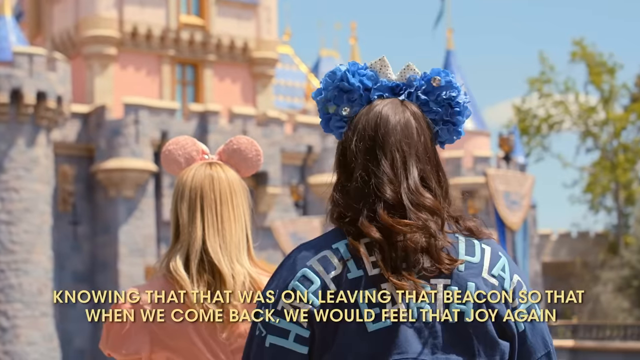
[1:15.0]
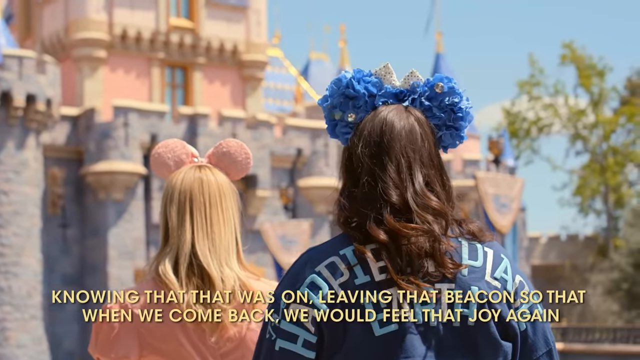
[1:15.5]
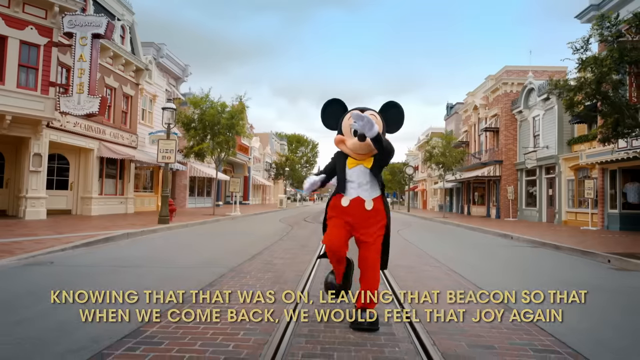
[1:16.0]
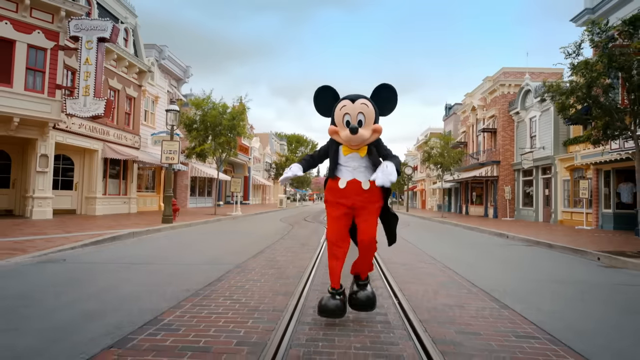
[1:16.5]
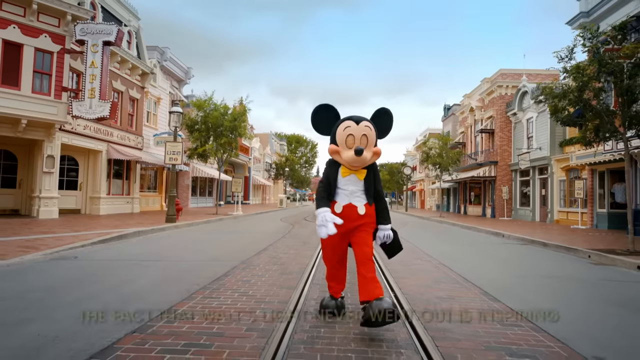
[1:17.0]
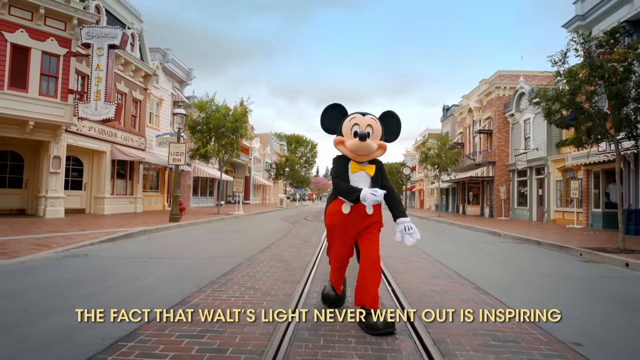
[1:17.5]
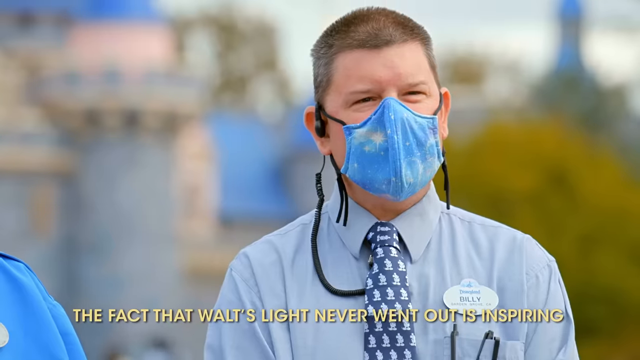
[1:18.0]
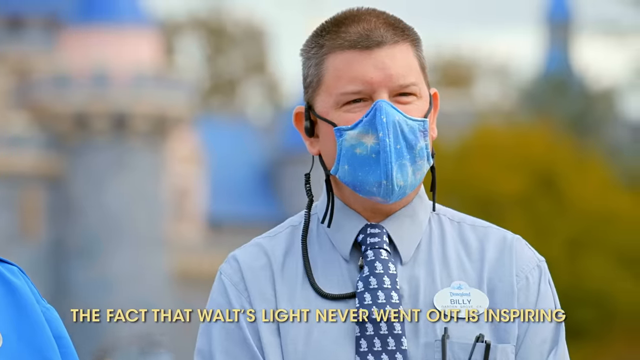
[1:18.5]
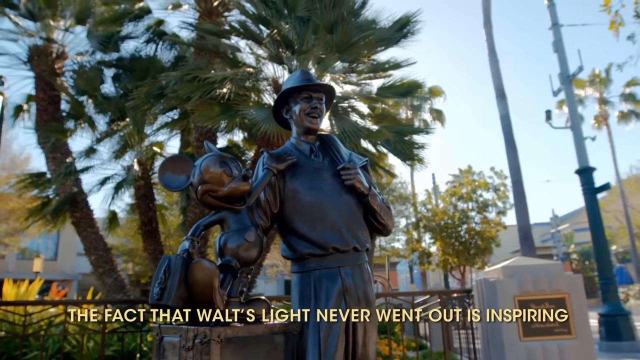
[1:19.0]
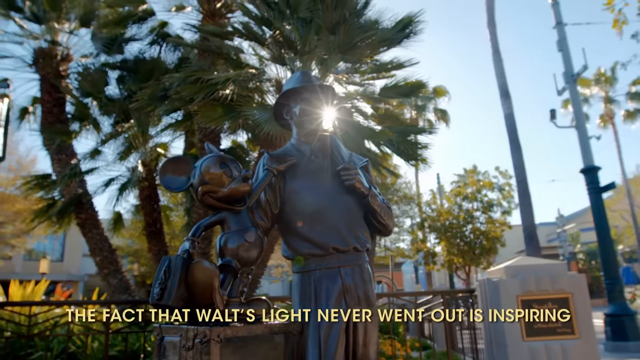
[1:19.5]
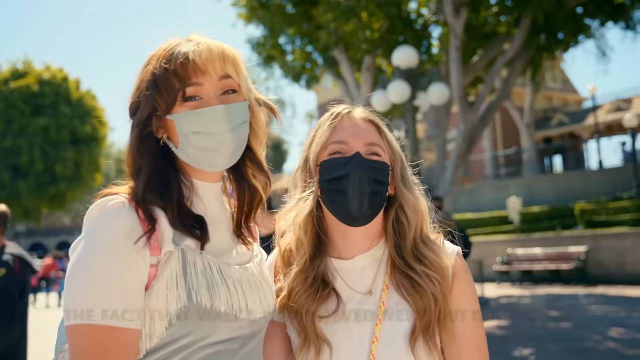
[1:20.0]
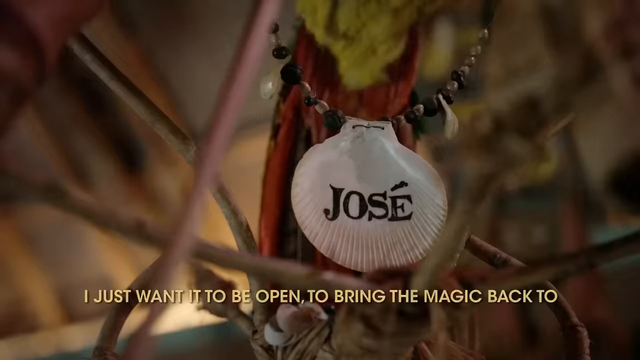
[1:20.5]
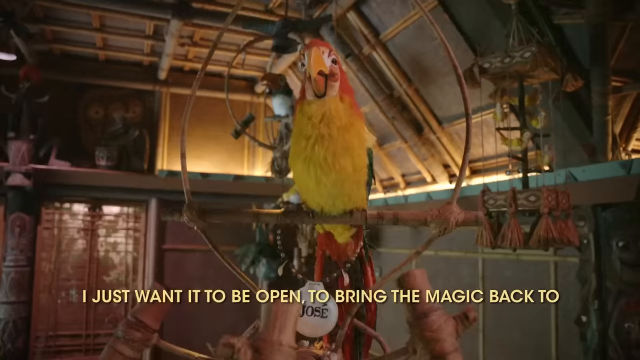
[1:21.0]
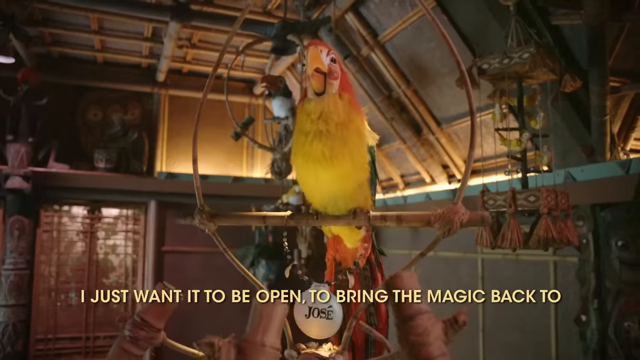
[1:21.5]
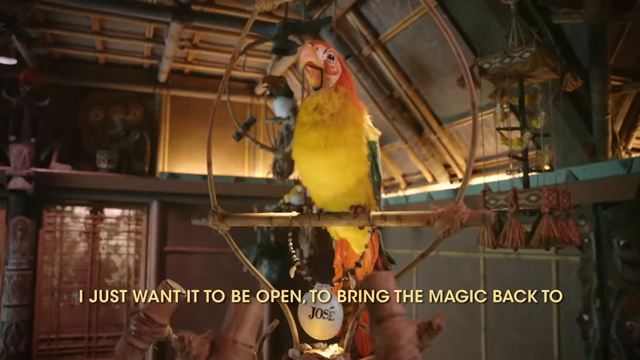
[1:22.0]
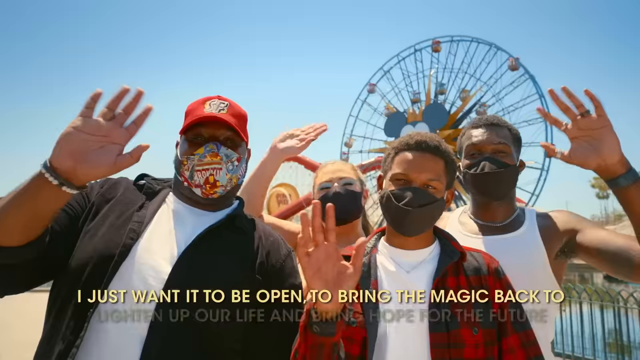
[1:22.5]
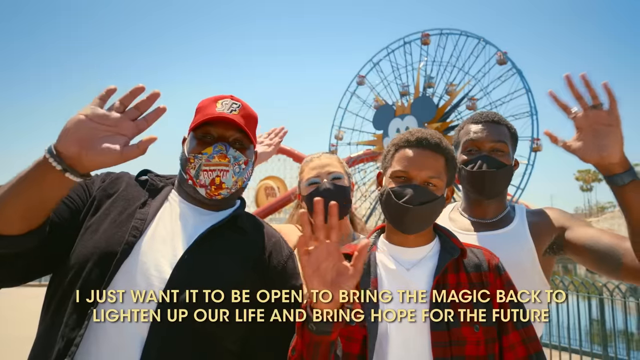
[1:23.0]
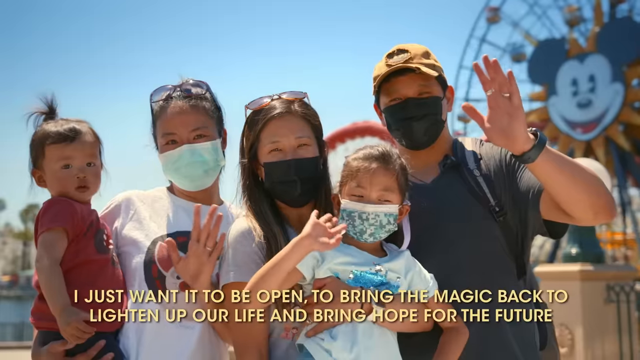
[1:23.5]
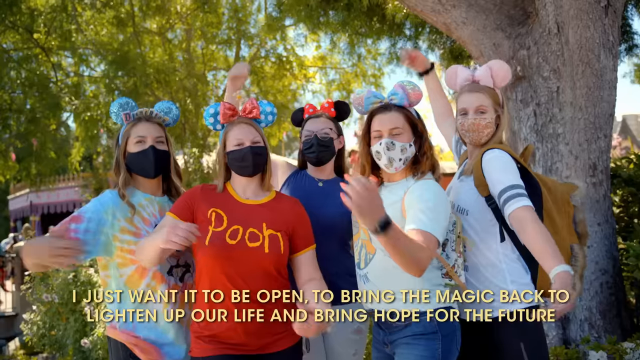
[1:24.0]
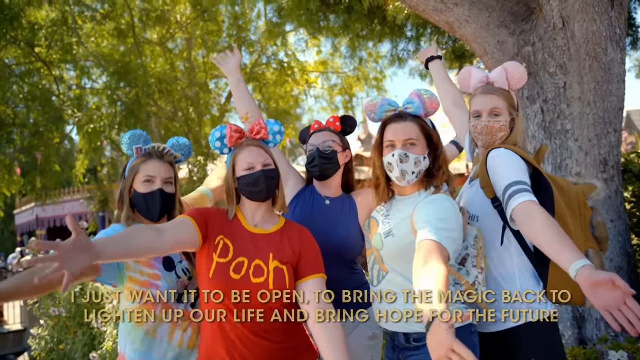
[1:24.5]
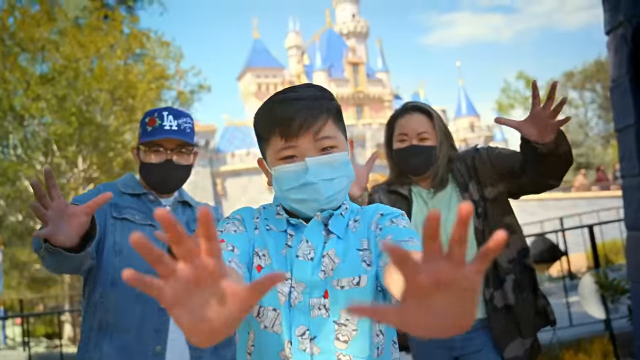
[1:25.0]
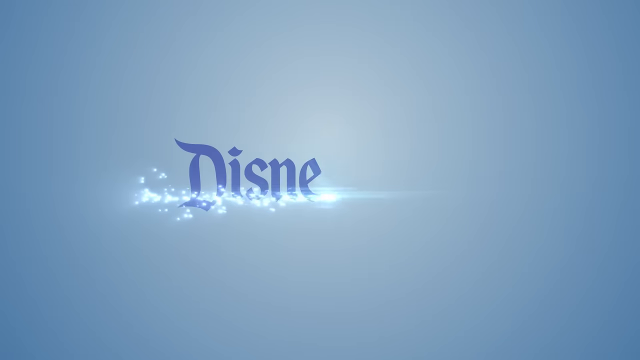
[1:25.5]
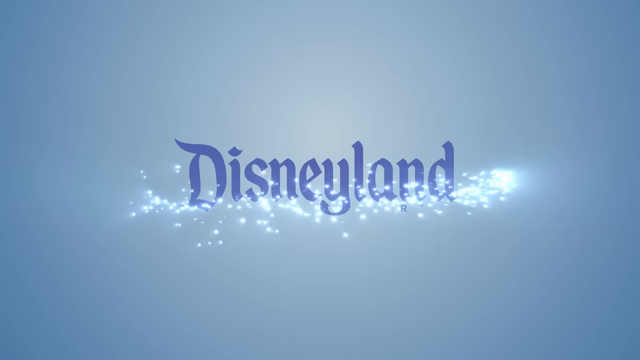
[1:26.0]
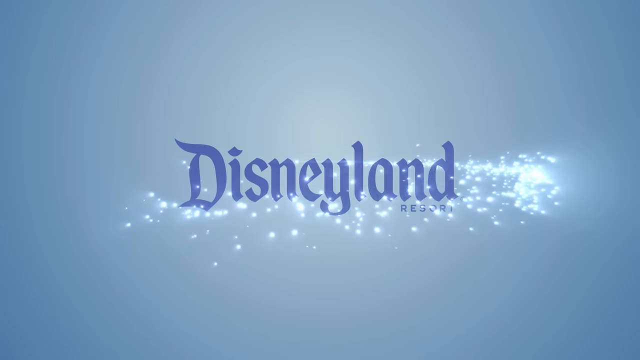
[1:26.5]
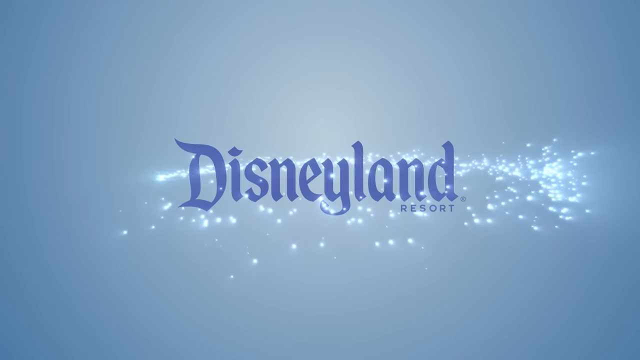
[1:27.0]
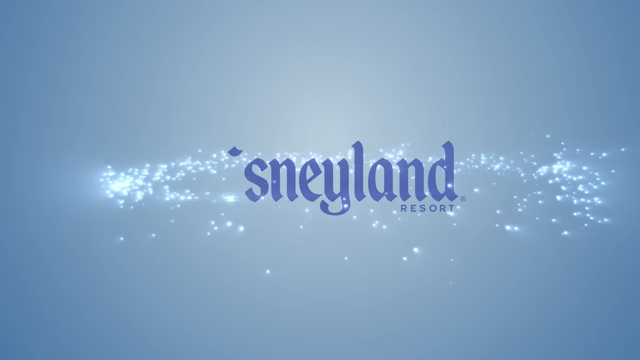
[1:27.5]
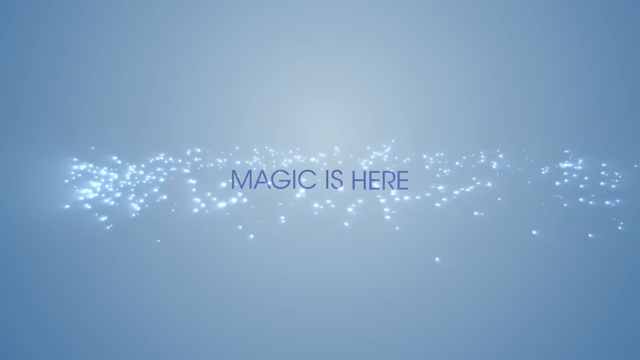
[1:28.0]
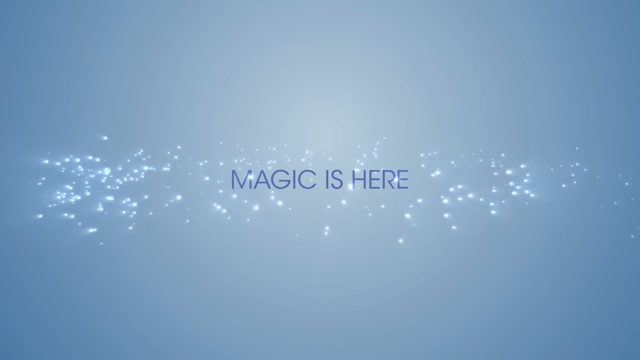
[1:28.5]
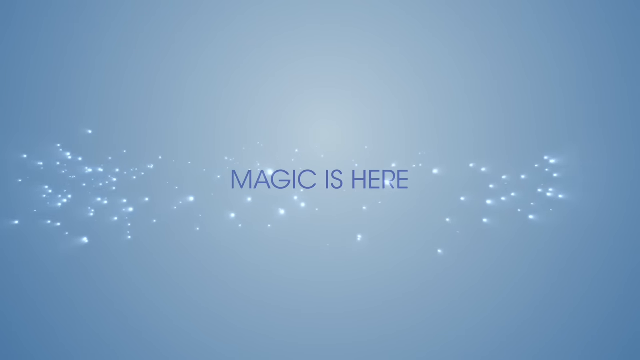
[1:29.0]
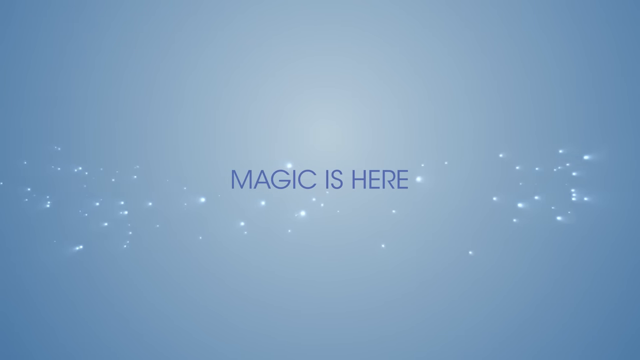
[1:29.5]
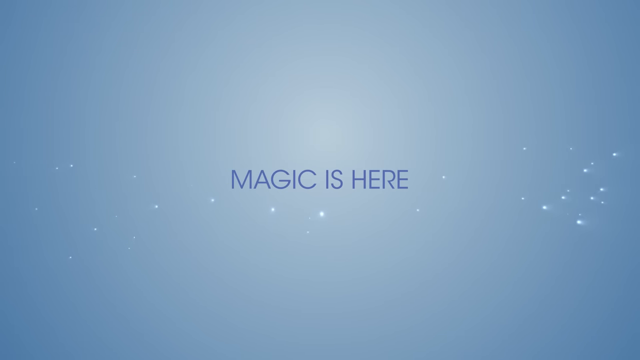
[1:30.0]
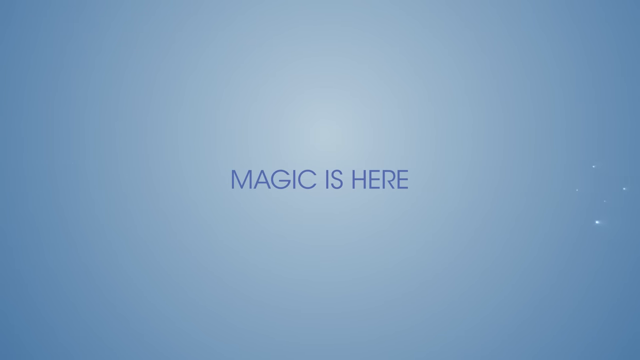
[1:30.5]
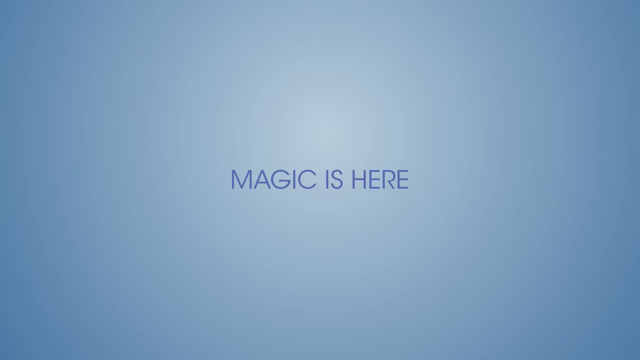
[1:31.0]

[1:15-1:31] A little girl appears as the montage of guests continues. Mickey skips happily alone down the center of a rail line, apparently where the train runs. A quick shot follows of a man who may be a high-ranking owner or CEO of the park; he is dressed in business attire, looks somewhat older, wears a mask, and talks calmly while smiling, seeming quite satisfied. He is in the park, with activity visible in the background. A statue of Walt Disney appears. The same people seen being interviewed throughout the video, including families, couples and children, now wave and pose for the camera without speaking, outstretching their arms. What looks like an image of a parrot appears. The video ends with a big Disney logo.